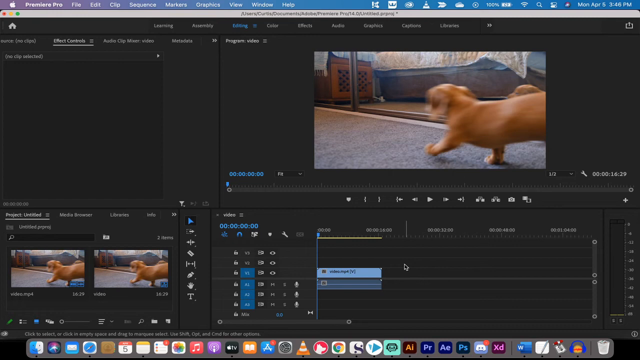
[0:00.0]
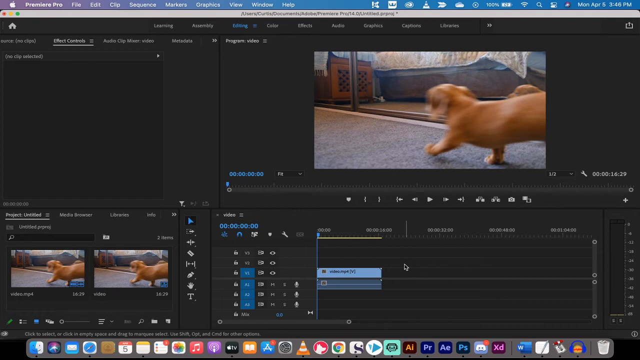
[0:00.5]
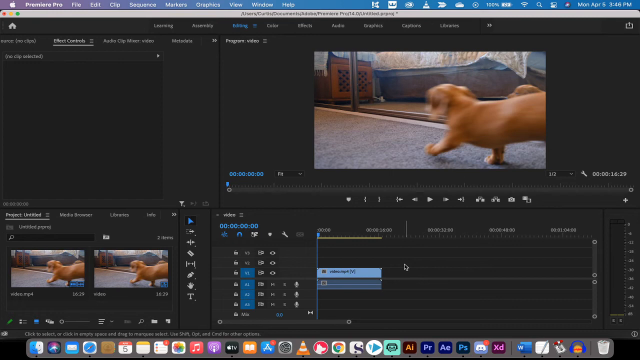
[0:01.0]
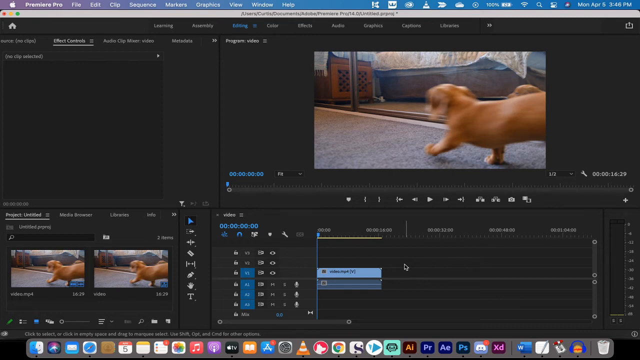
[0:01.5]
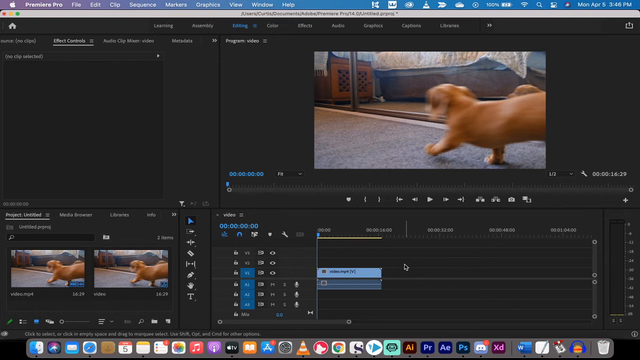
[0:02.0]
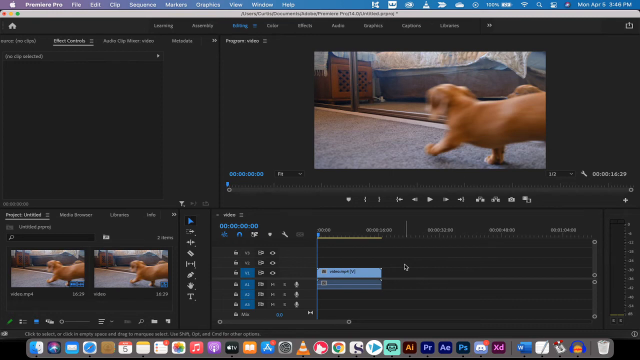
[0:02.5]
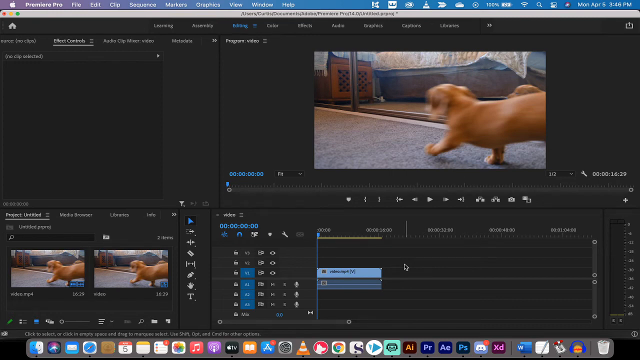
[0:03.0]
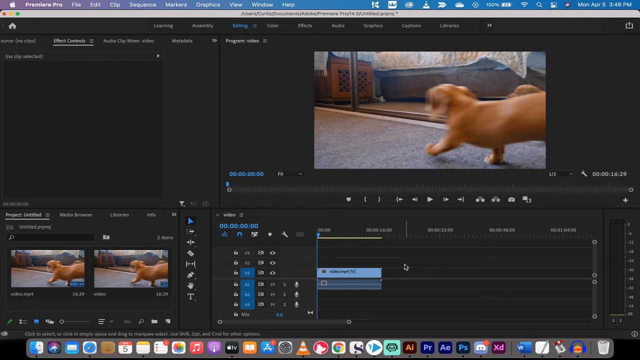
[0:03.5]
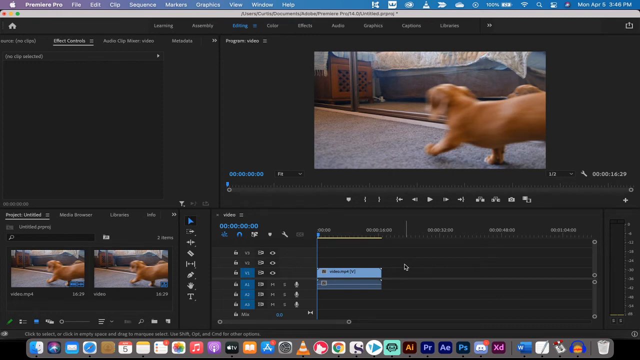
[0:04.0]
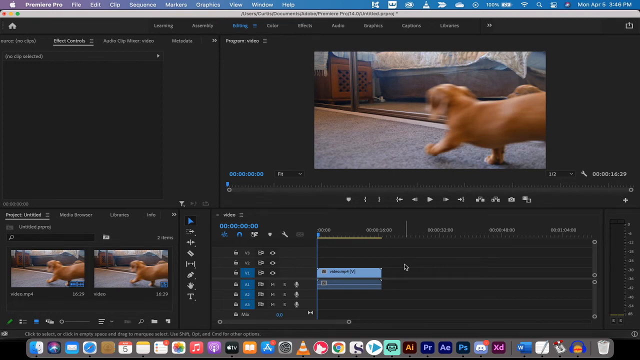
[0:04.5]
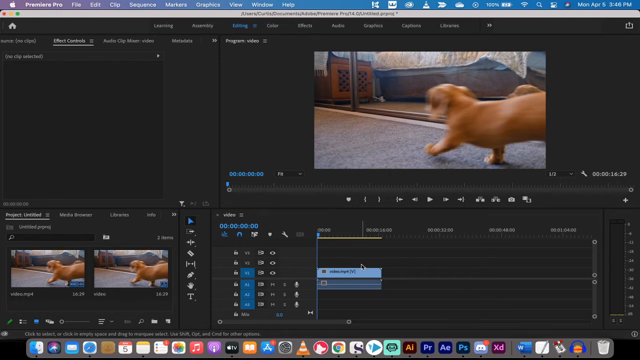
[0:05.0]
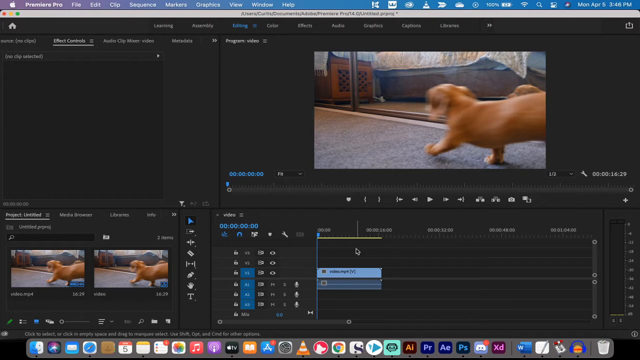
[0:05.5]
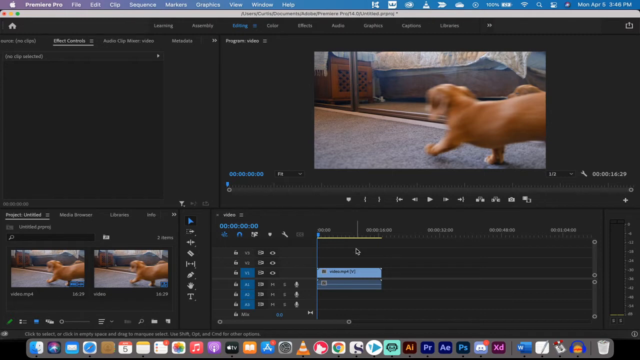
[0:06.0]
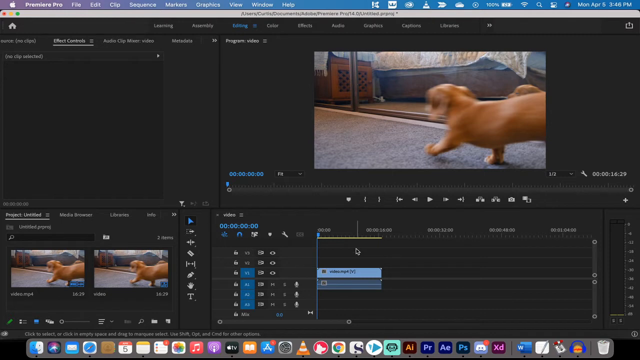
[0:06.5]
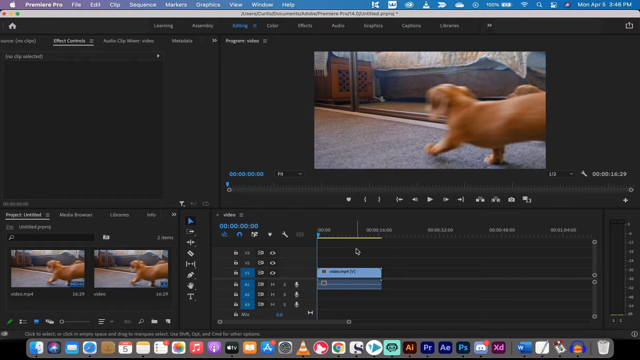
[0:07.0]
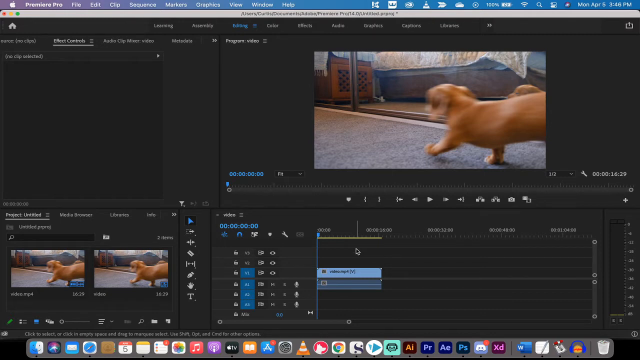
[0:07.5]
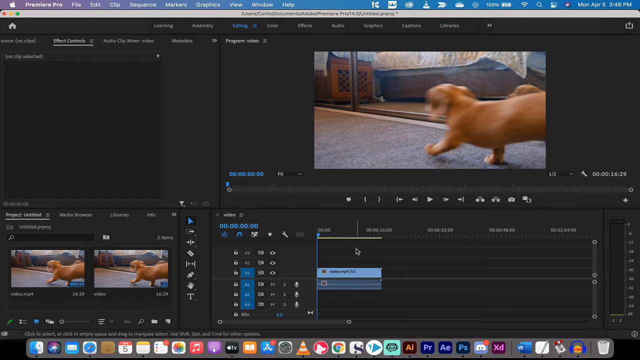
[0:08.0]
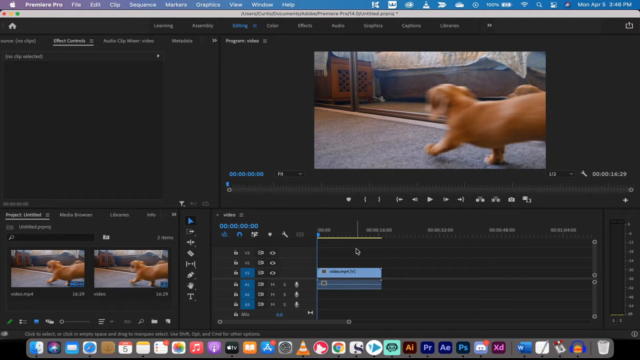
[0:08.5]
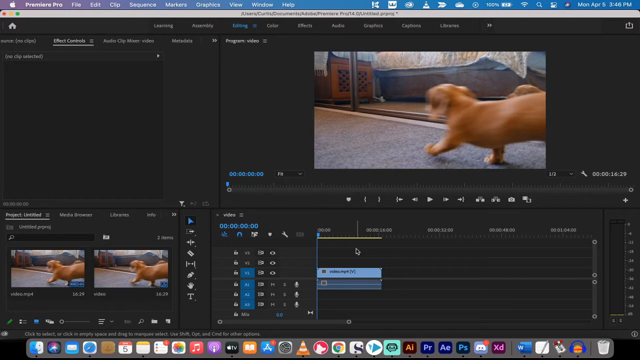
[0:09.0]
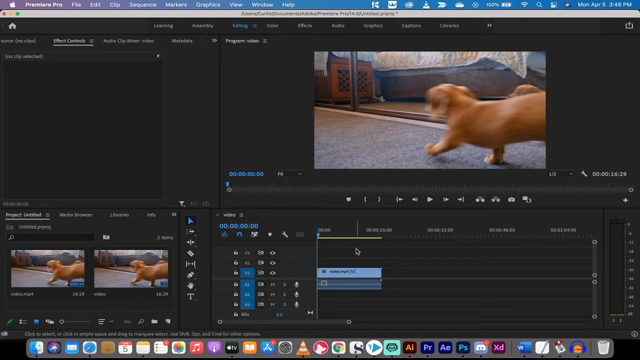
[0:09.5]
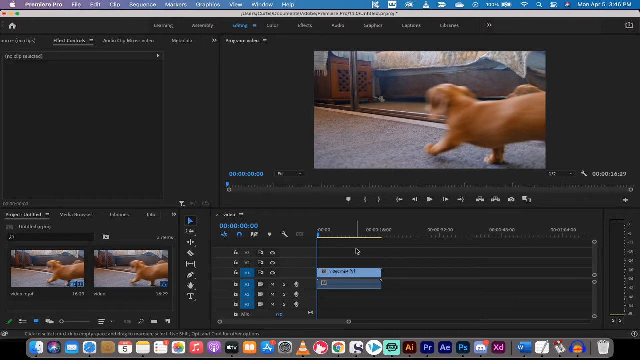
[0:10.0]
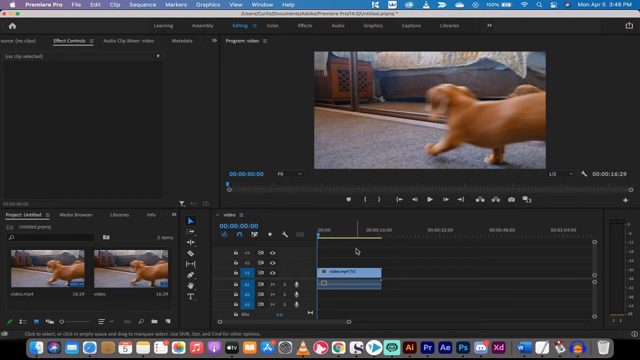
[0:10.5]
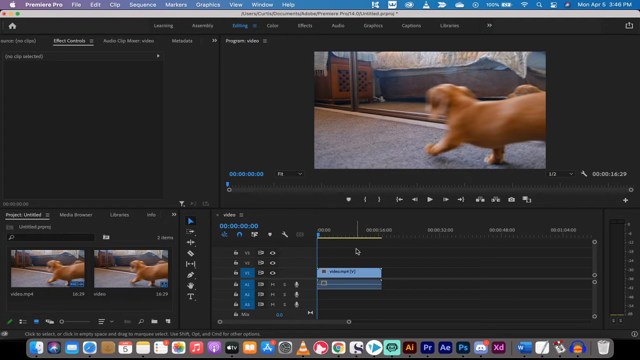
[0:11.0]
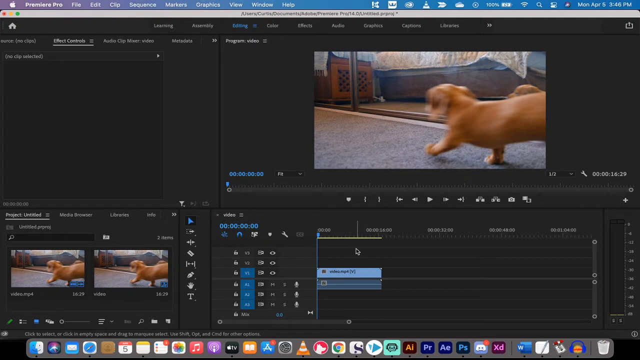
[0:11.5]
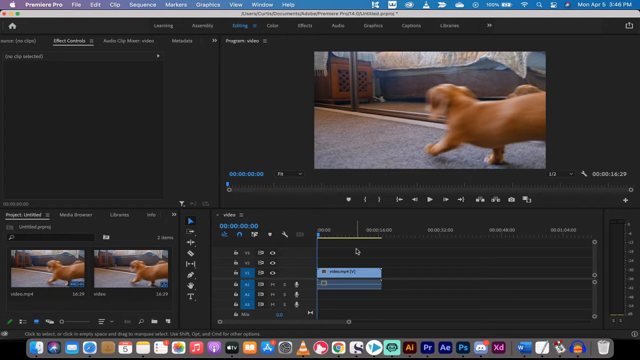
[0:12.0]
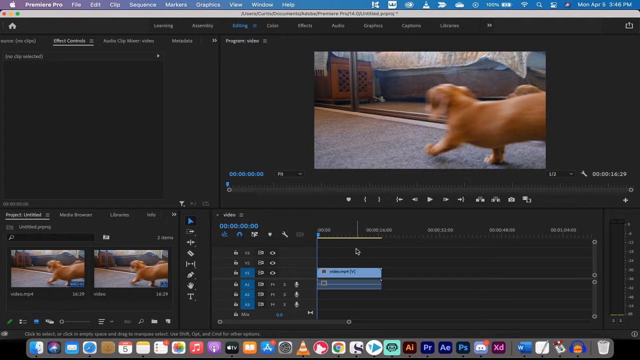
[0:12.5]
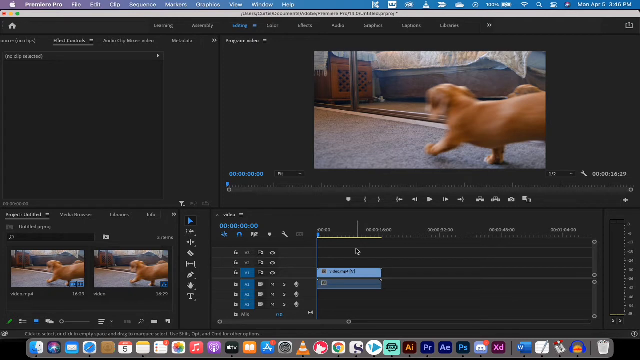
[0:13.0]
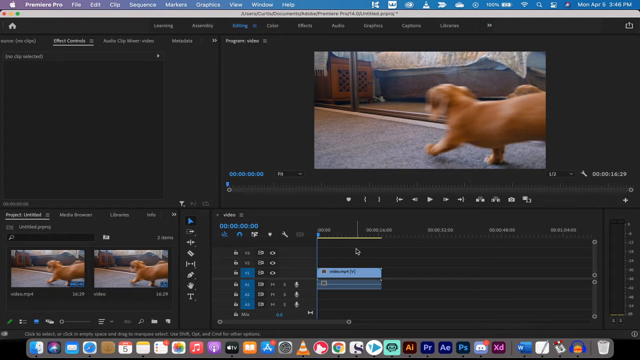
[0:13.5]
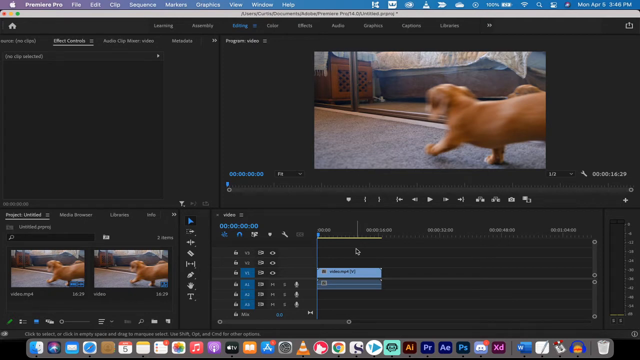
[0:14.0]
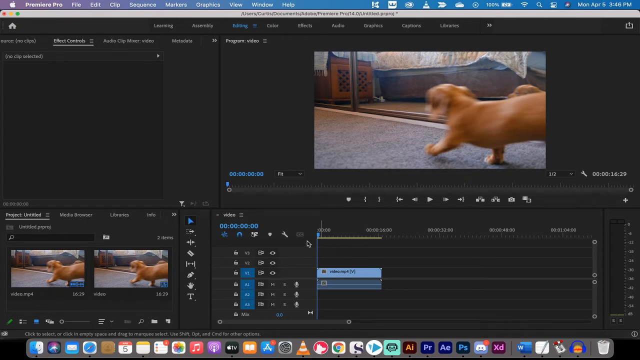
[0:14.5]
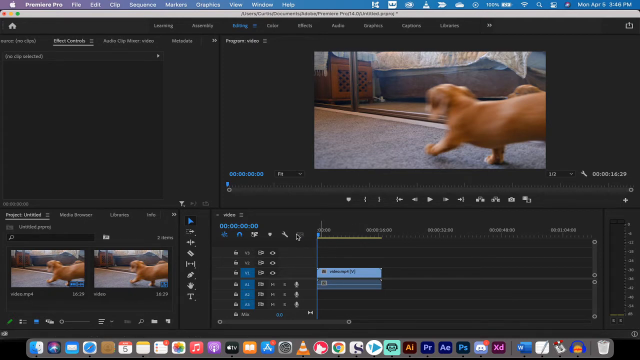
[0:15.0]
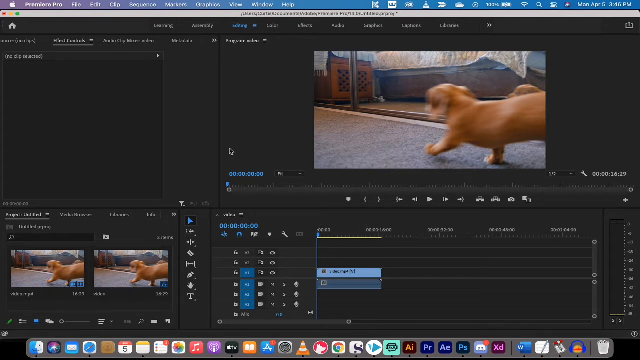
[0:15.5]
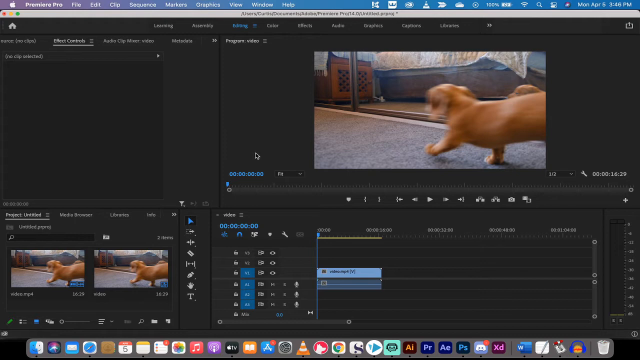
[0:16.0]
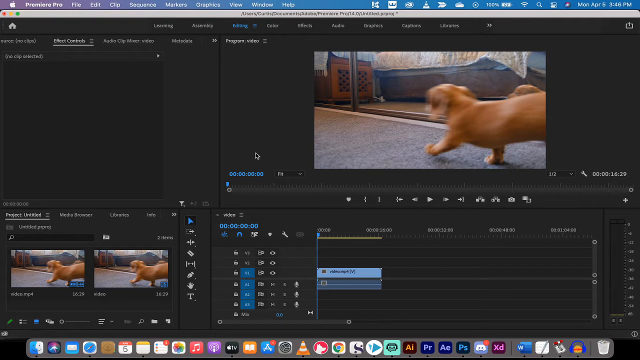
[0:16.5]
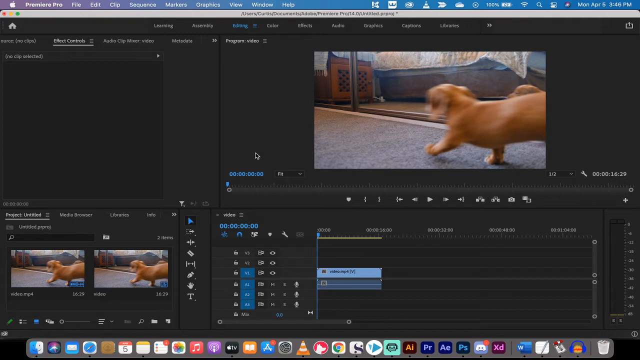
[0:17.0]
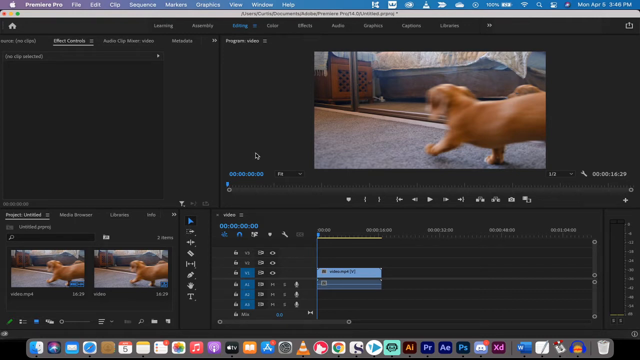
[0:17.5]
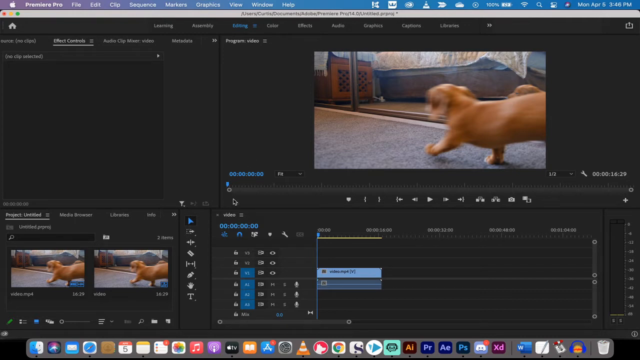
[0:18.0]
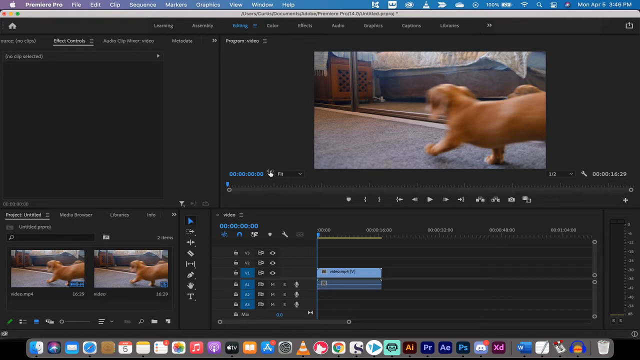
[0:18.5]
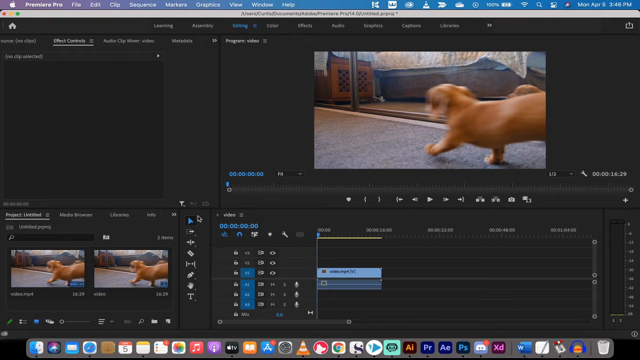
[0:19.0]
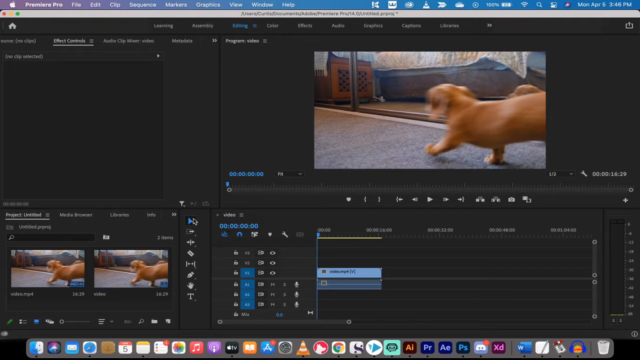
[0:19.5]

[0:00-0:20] A video editing program is on screen, and the preview video shows that the user is editing dog-related videos. In the top right of the screen are two brown dogs that appear to be small or medium sized. The user has uploaded one clip, and the program is Premiere Pro. The cursor starts in the bottom right on the timeline section, moves slightly within the timeline box from the bottom right up toward the top left, and stays there. A few seconds later it moves over to the left side of the timeline box where the settings are, and finally it moves all the way up to the video preview section.